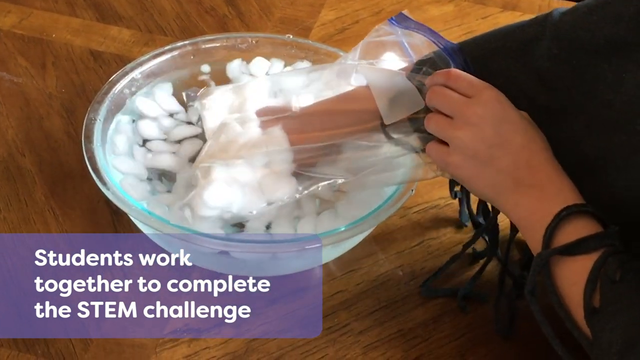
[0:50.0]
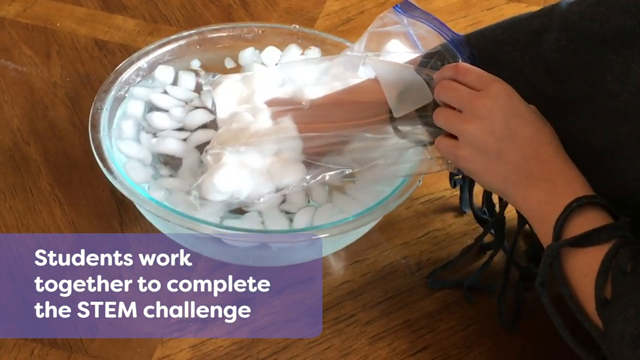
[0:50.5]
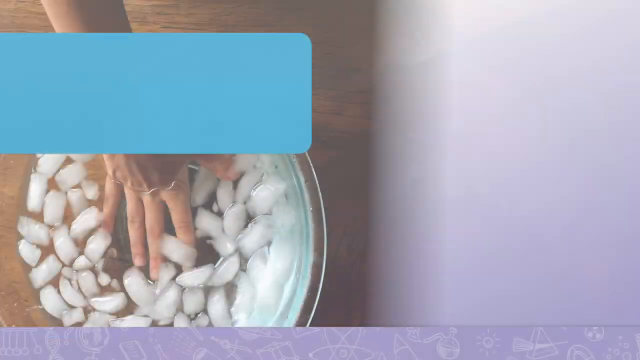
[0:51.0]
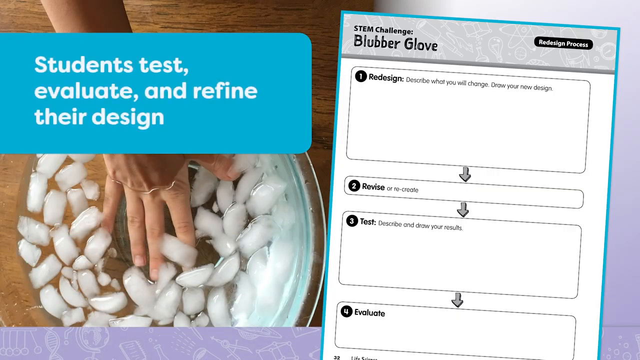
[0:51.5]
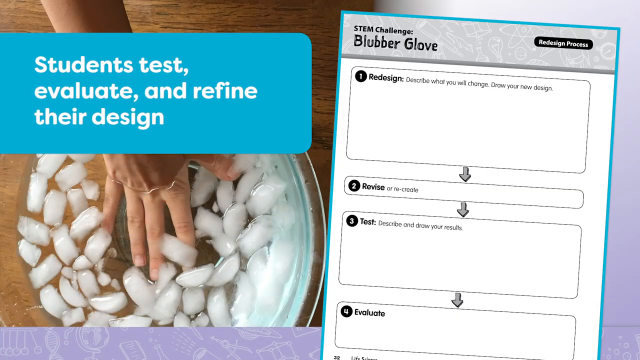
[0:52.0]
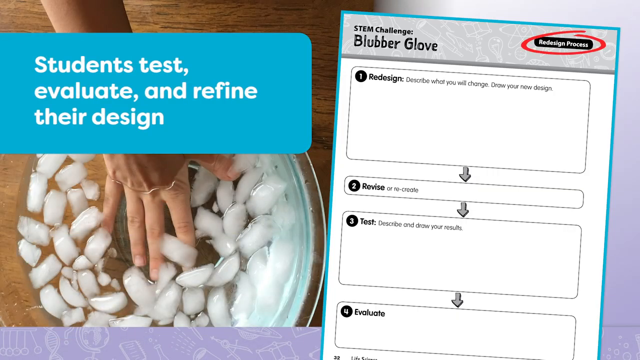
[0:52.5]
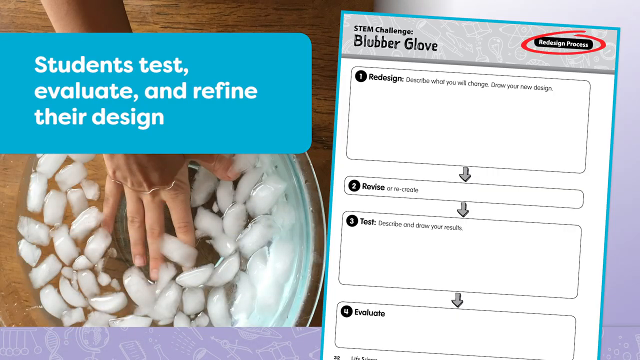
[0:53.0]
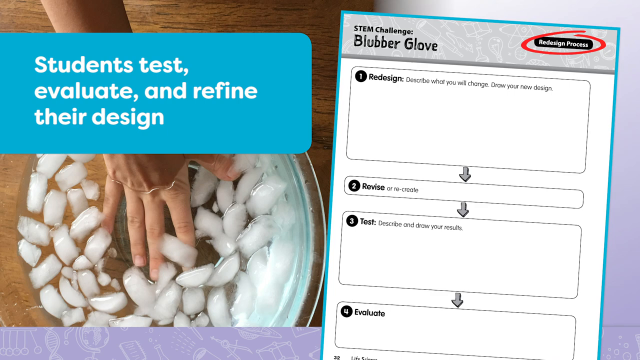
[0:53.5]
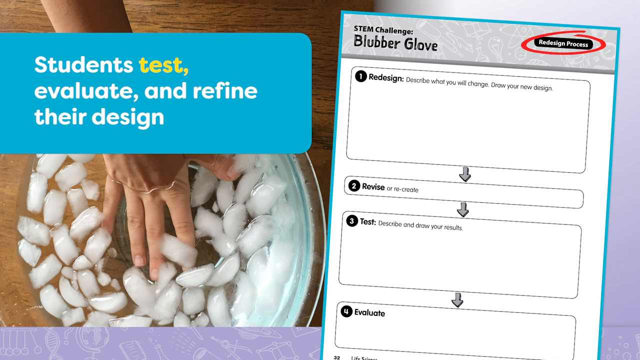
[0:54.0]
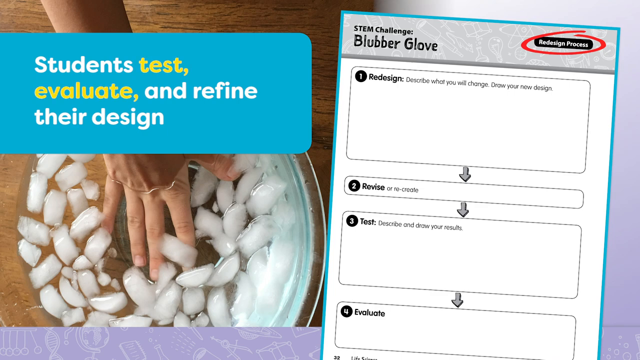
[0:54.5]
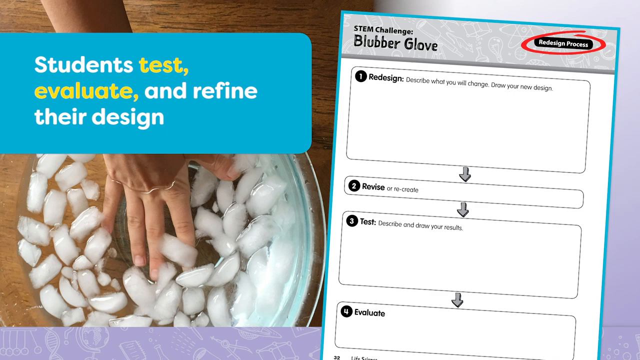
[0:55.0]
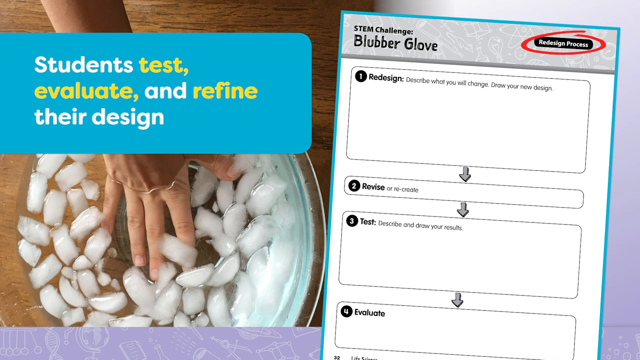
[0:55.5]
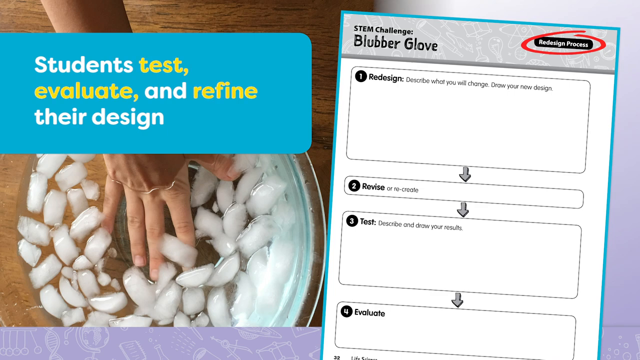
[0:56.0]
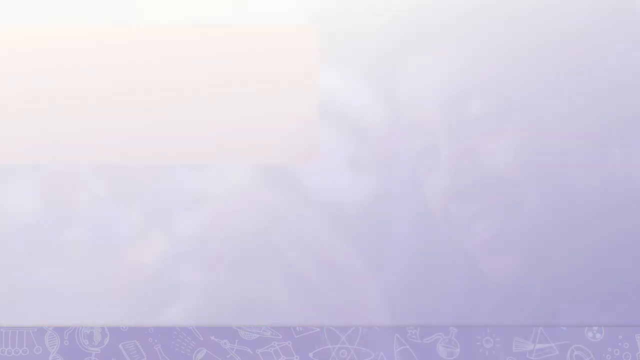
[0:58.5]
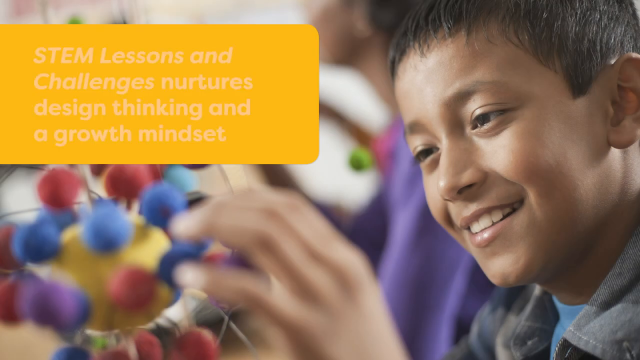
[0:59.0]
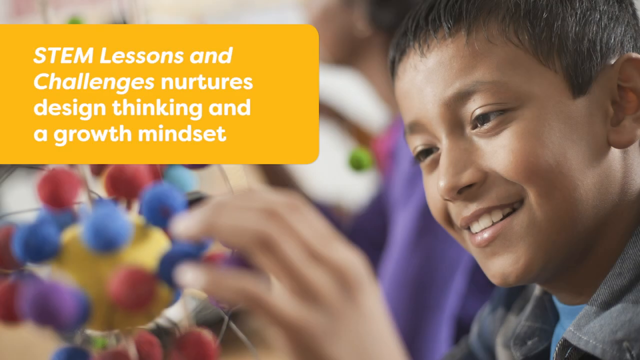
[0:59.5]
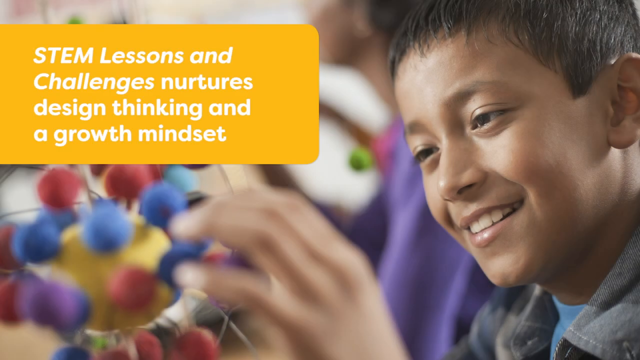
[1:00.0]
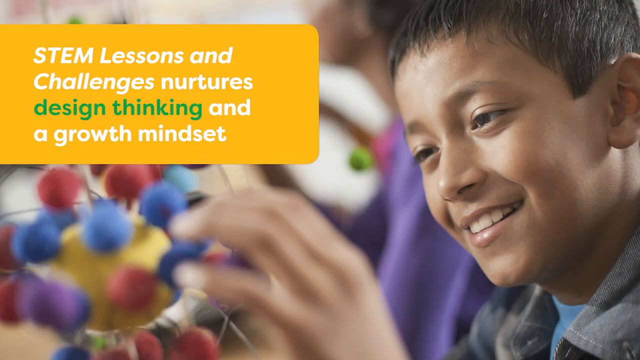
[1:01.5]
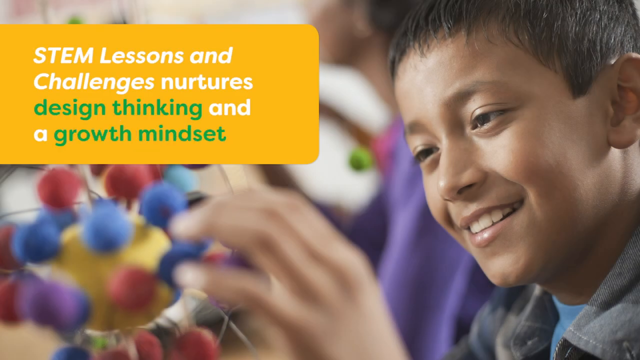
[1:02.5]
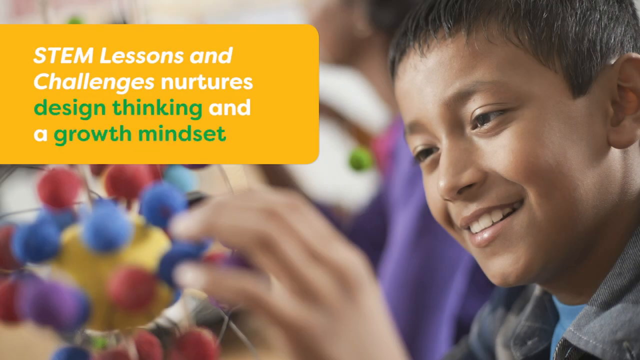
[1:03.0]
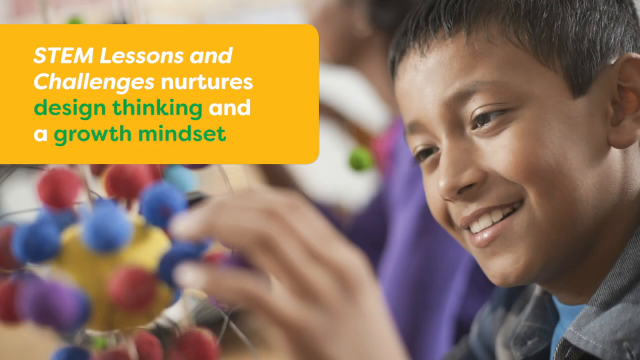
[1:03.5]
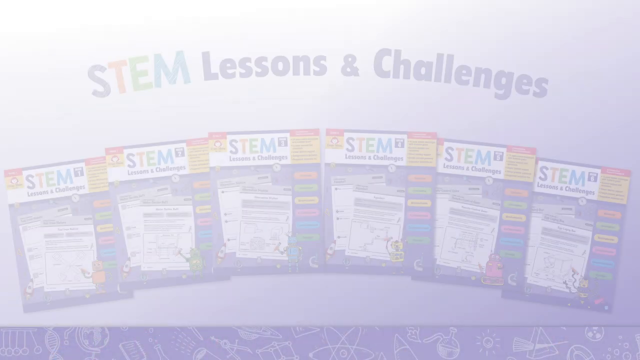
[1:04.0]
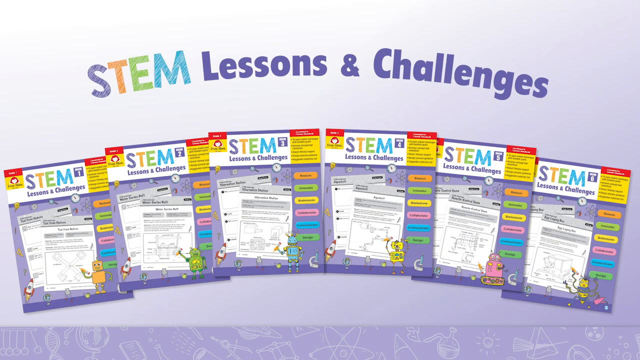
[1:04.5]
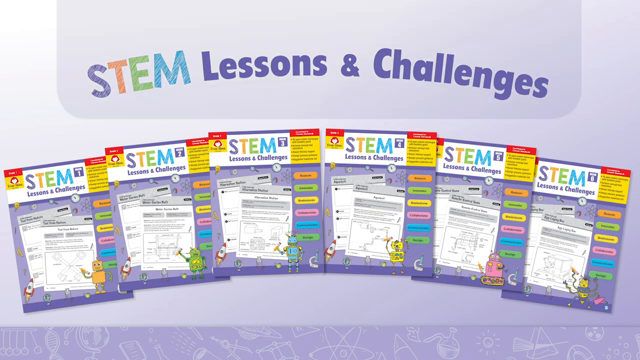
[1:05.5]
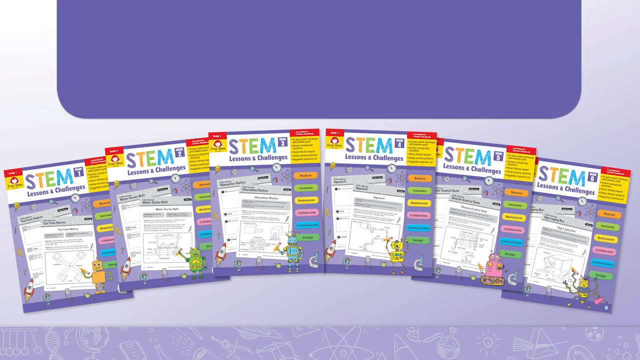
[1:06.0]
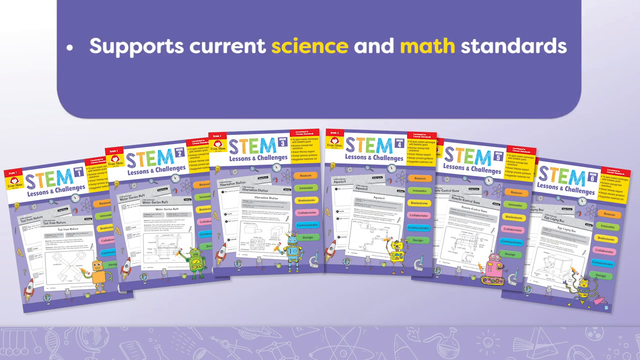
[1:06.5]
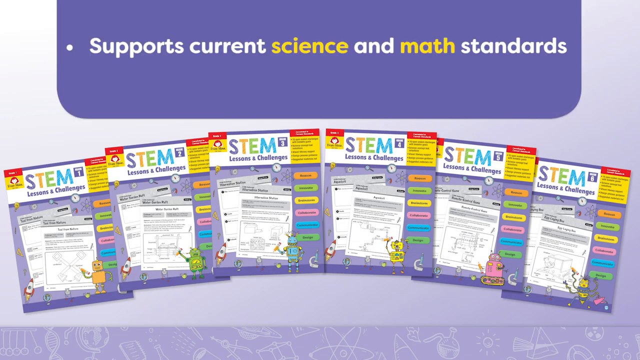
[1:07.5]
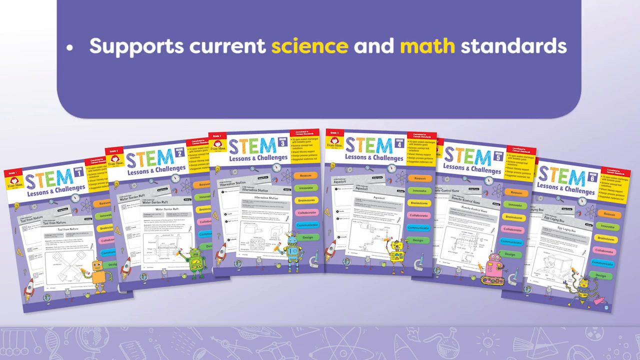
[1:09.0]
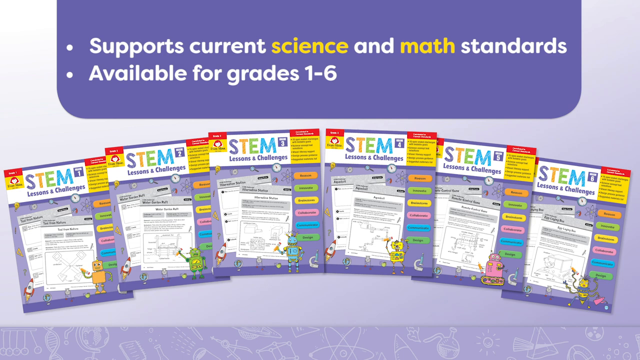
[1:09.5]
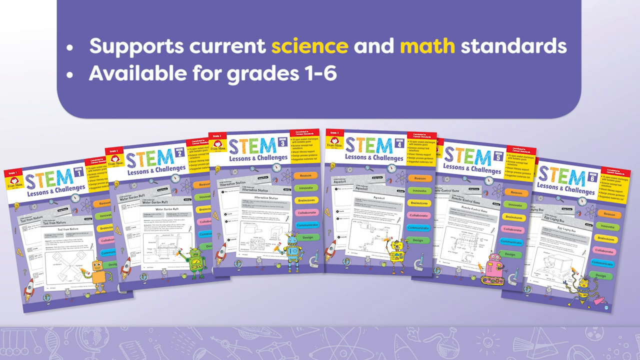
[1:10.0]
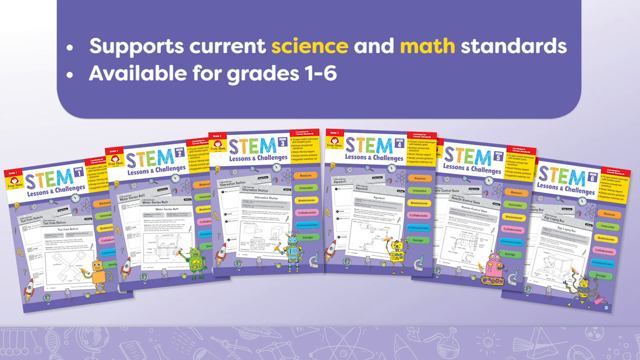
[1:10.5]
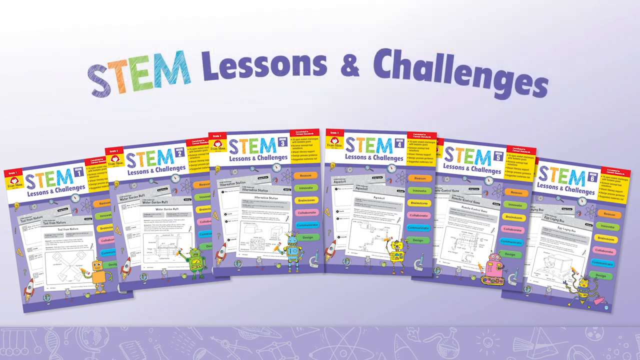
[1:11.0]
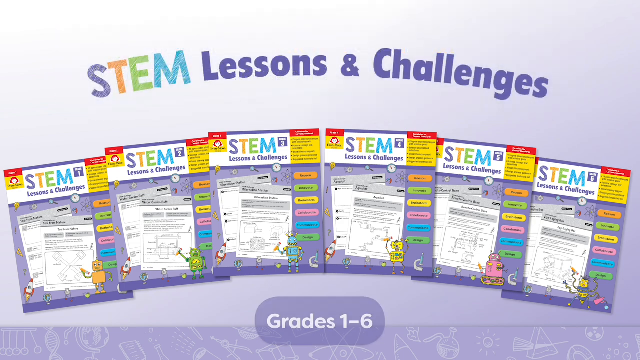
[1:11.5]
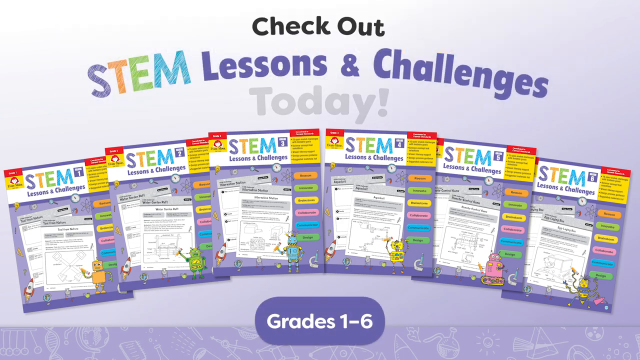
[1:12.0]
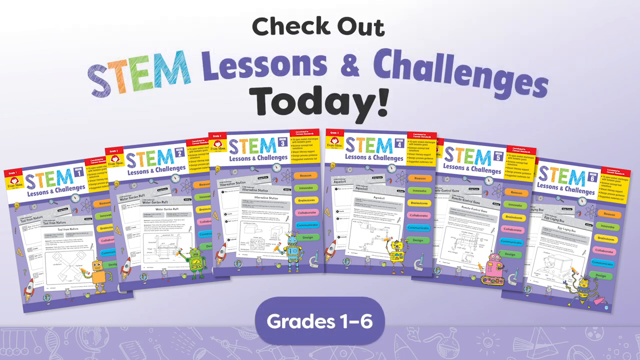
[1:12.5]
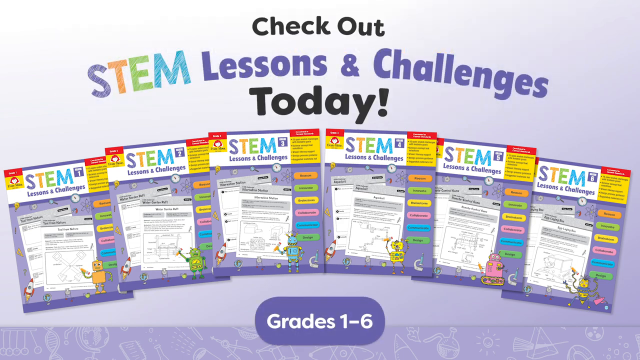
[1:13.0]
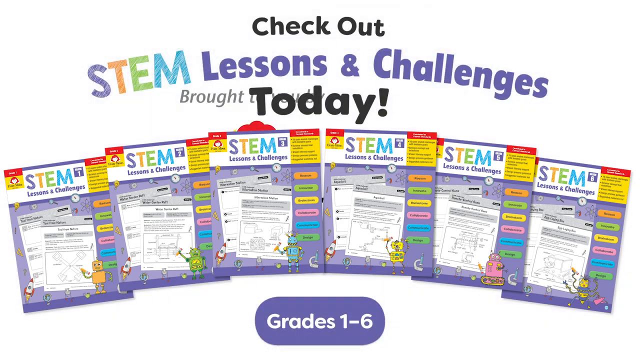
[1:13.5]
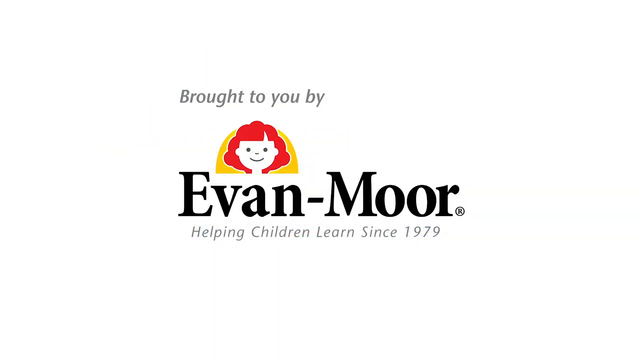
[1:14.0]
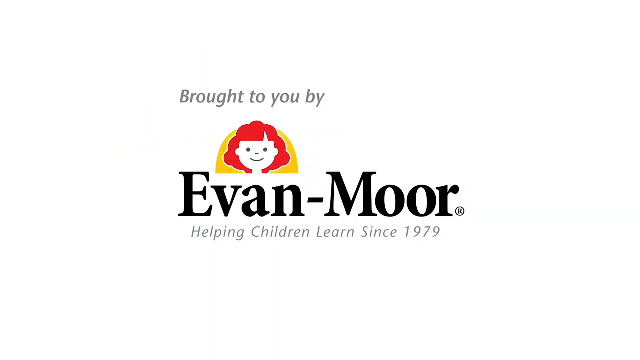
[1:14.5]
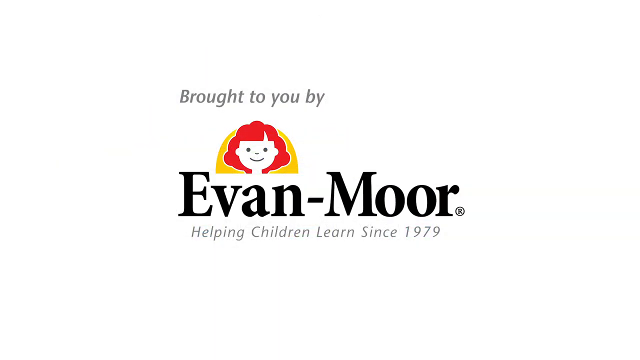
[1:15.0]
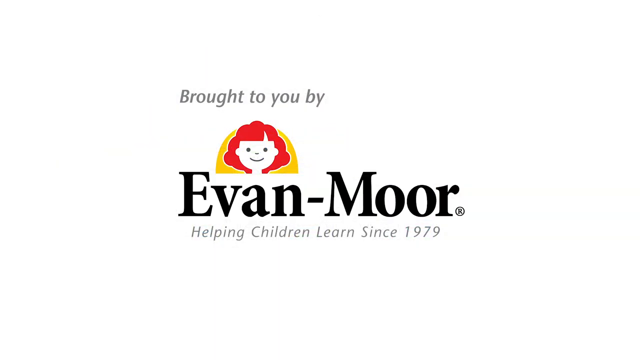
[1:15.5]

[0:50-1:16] The person mixes something in the bowl as the text changes from "students work together to complete the STEM challenge" to "students test, evaluate, and refine their design", with a static hand symbol within the bowl. On the right, the checklist shows "redesign process" circled in red, and "test, evaluate, refine" is then highlighted in yellow. Next comes a picture of a child on the right, with text at the top left reading "STEM lessons and challenges nurture design thinking and growth mindset"; "design thinking" and "growth mindset" appear in green. A slide then shows "STEM lessons and challenges" with six nicely marketed spreadsheets below, arranged in a rainbow-like setting across the screen. Above, a rectangle transitions in with the text "supports current science and math standards", with "science" and "math" in yellow, along with "grades one through six". Below, a message reads "check out STEM lessons and challenges today!". The video fades out to a last slide reading "brought to you by" with the little icon of a childish face with red hair across a kind of rainbow-yellow structure, and the brand "EVAN-MOOR", apparently a registered trademark, with the motto "Helping Children Learn Since 1979". "brought to you by" and the motto are in grey italic font, while "EVAN-MOOR" is in black.